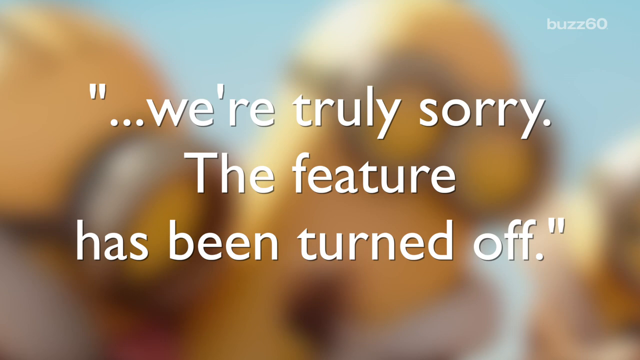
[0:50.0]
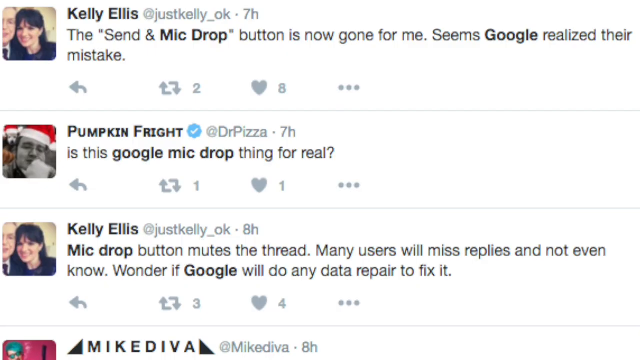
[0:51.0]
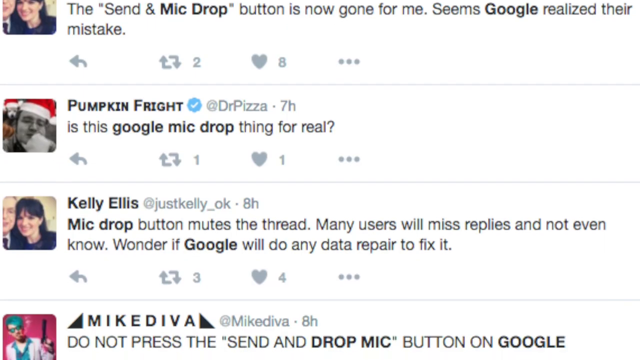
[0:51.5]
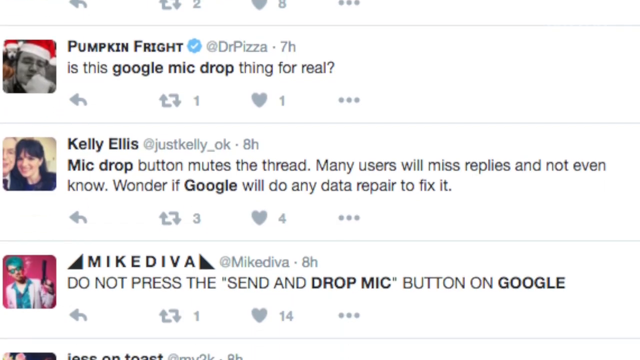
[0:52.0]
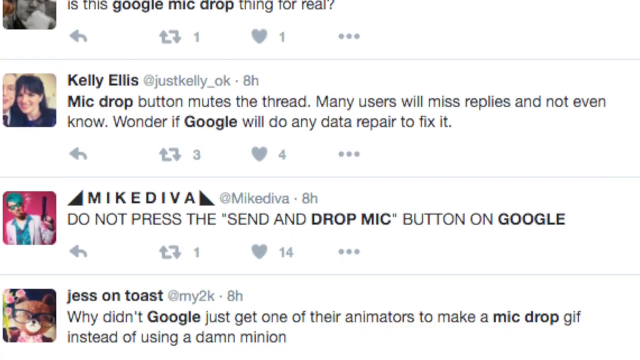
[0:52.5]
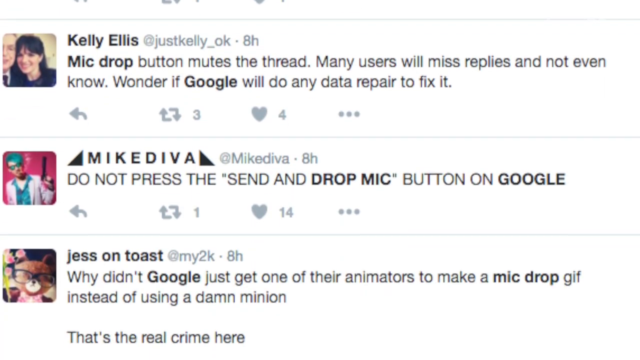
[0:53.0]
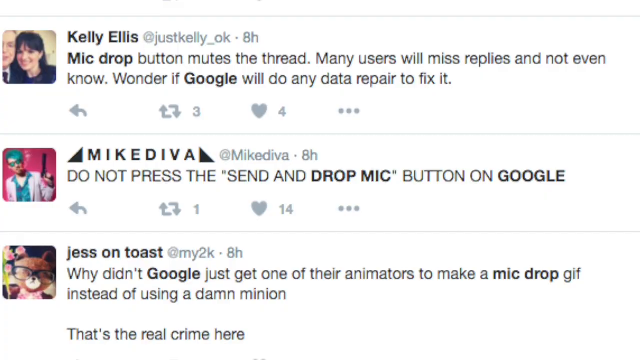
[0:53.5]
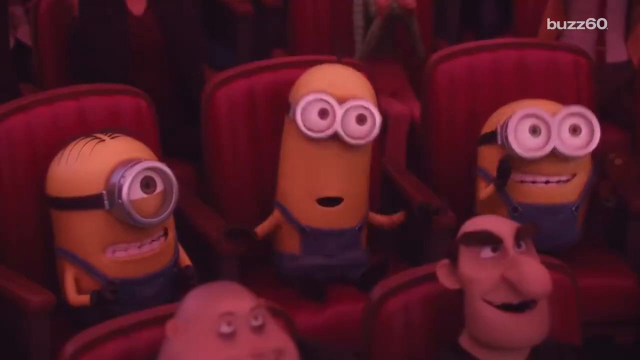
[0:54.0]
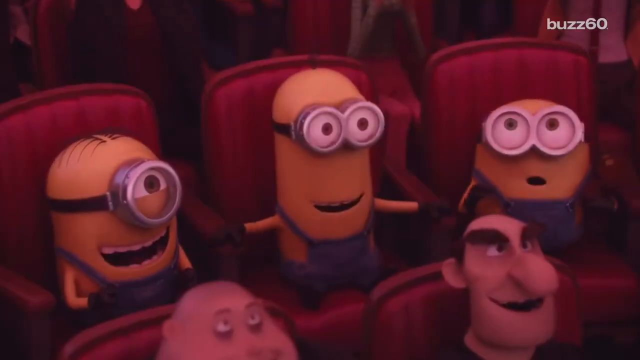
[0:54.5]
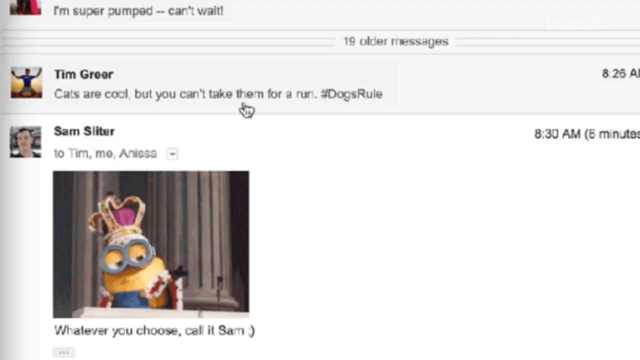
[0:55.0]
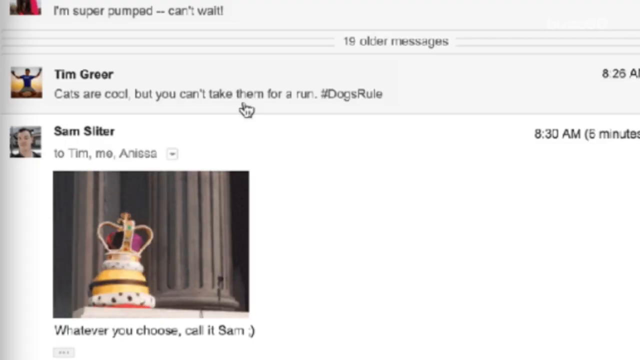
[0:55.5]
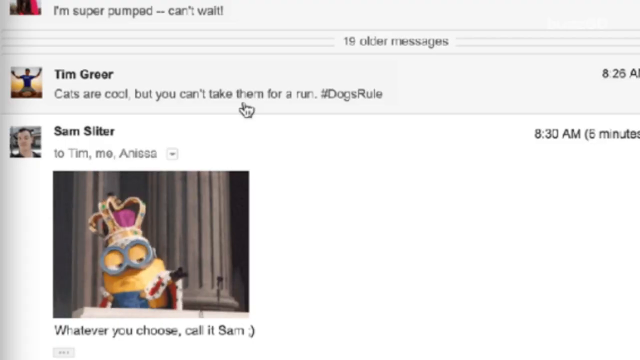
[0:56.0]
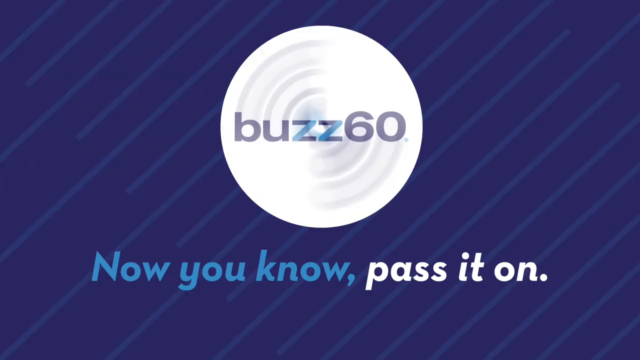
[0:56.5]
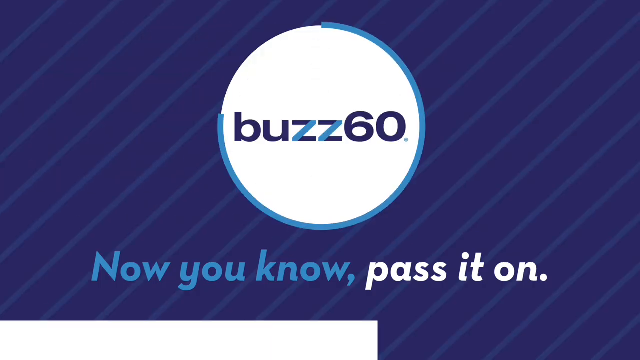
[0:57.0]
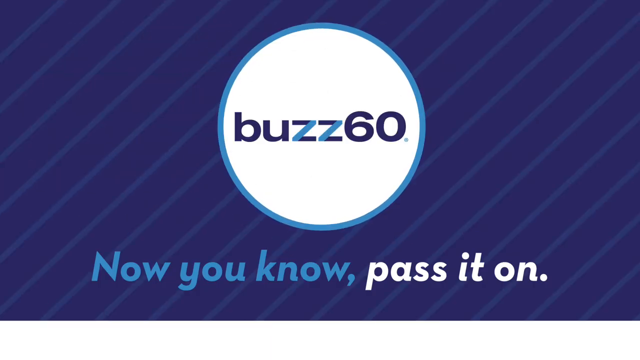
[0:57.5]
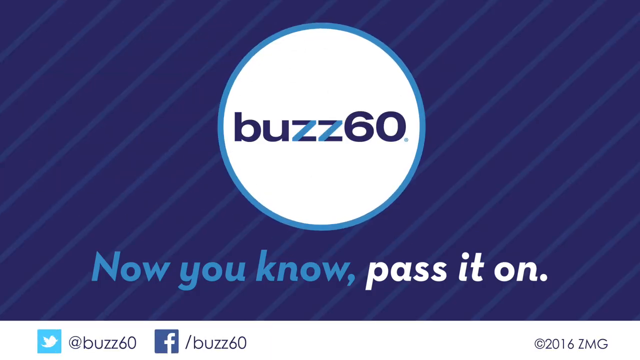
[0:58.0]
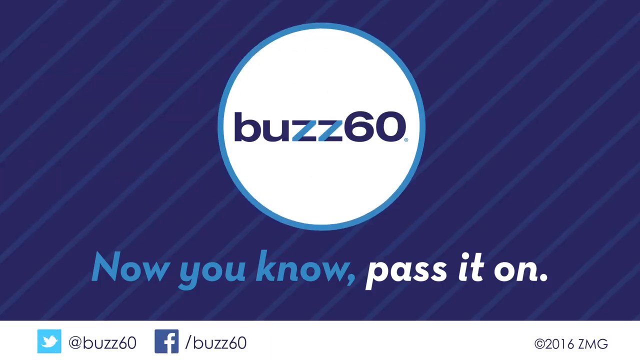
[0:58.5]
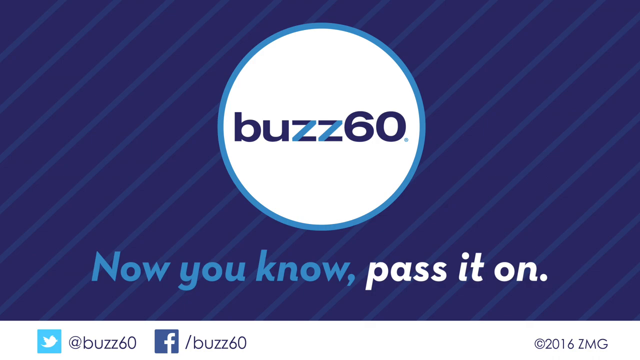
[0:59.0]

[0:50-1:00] Text reads "we're truly sorry the feature's been turned off" and "do not press the send and drop mic button." The minions then appear in an office. The video seems to play at high speed and shows people's reactions, which pass too quickly to read. It ends with "now you know pass it on" and "Buzz 60".